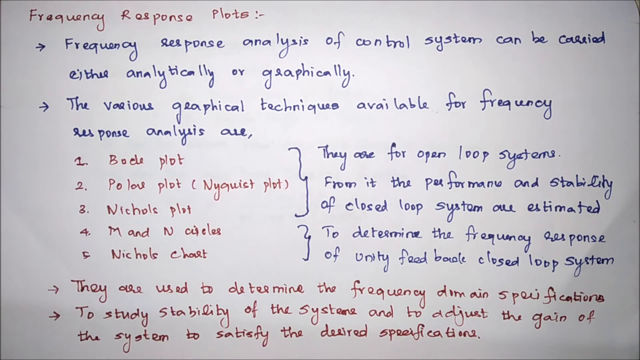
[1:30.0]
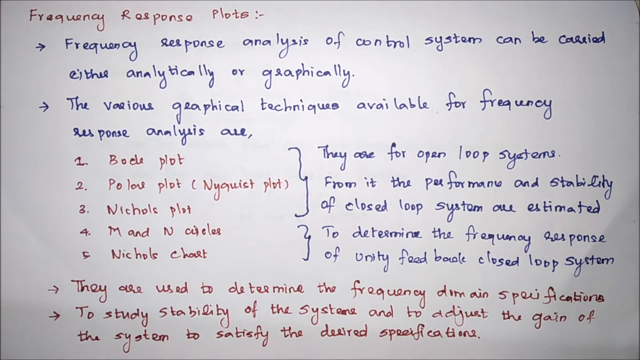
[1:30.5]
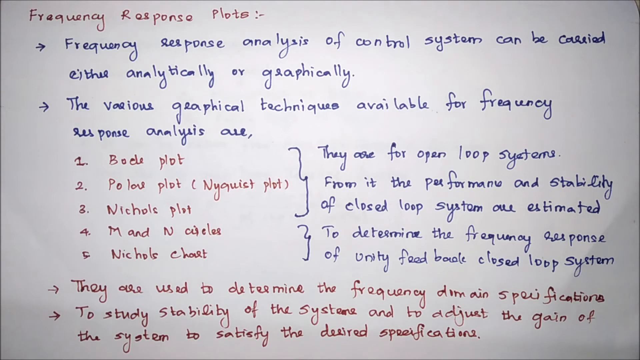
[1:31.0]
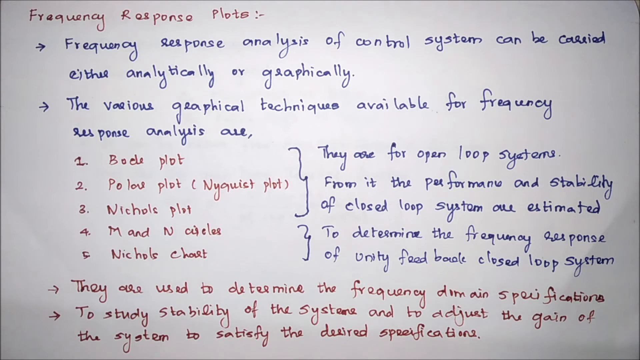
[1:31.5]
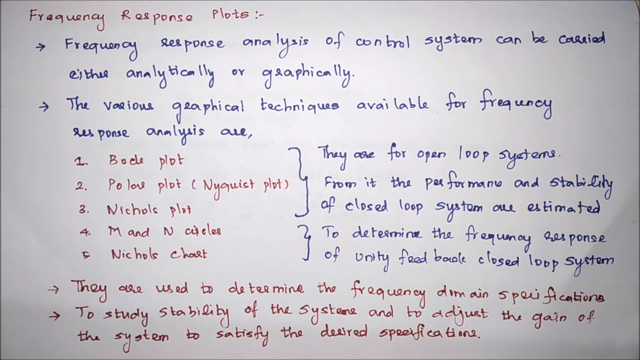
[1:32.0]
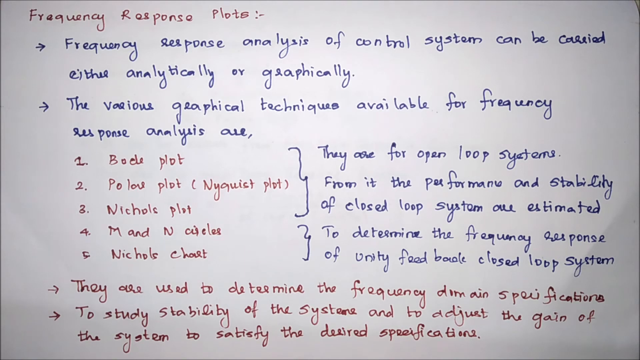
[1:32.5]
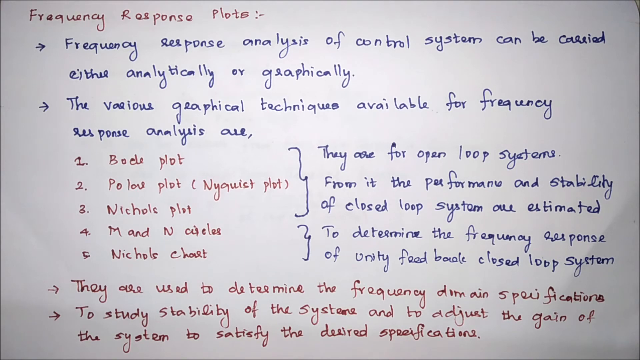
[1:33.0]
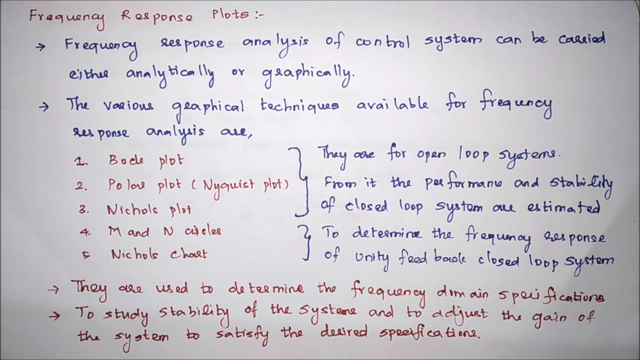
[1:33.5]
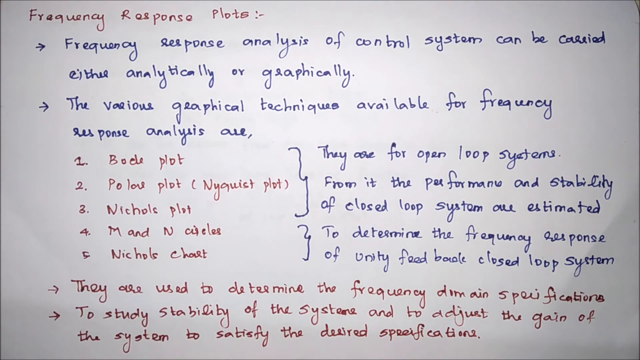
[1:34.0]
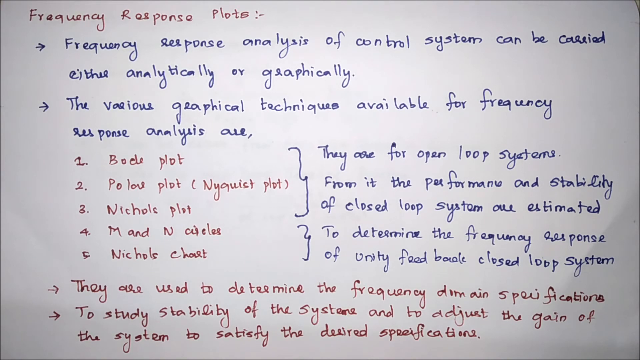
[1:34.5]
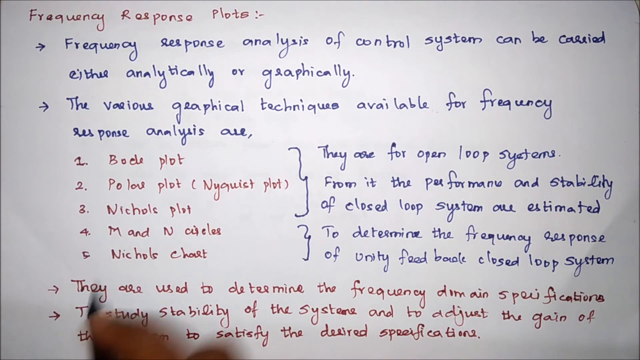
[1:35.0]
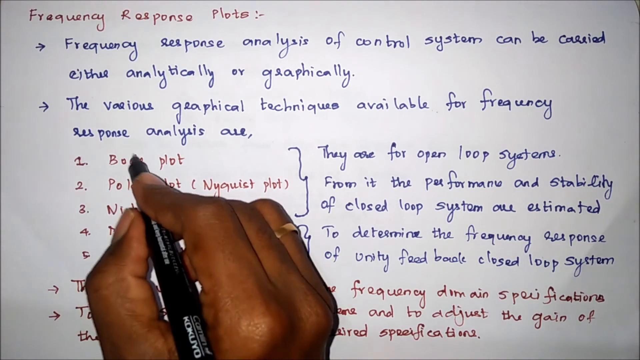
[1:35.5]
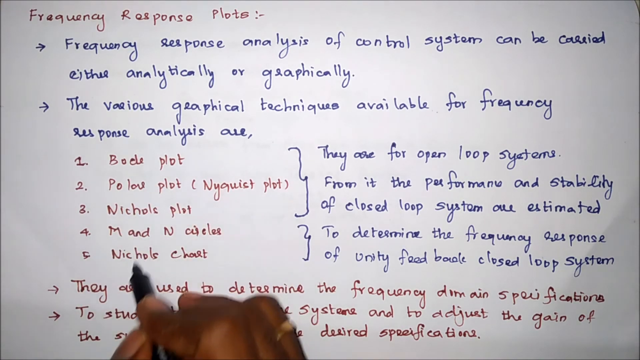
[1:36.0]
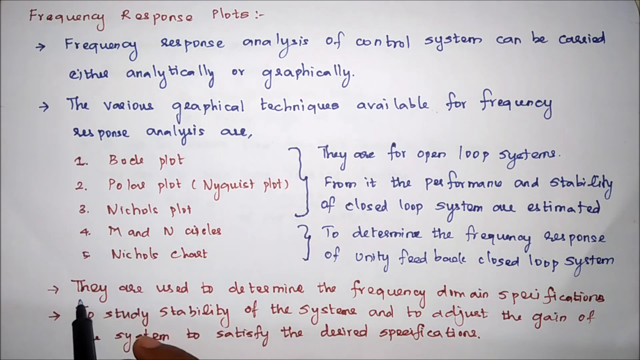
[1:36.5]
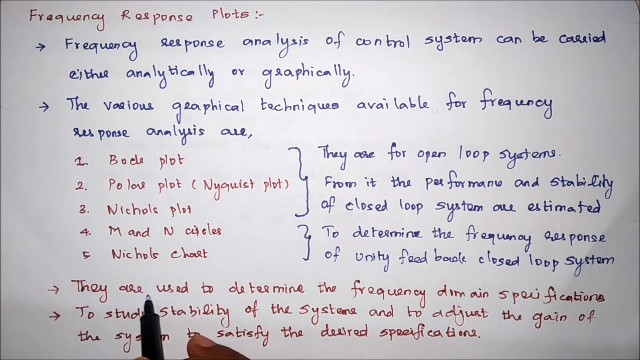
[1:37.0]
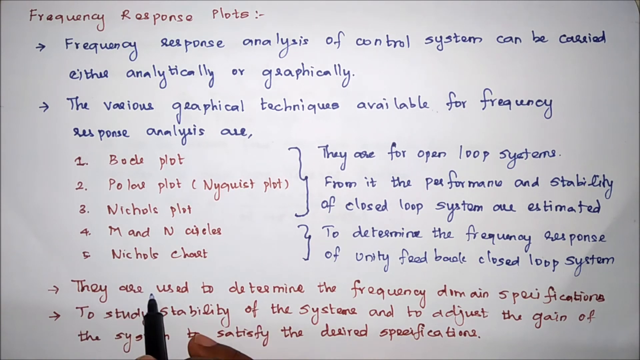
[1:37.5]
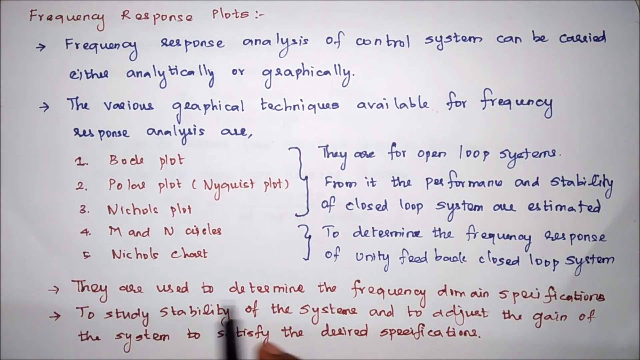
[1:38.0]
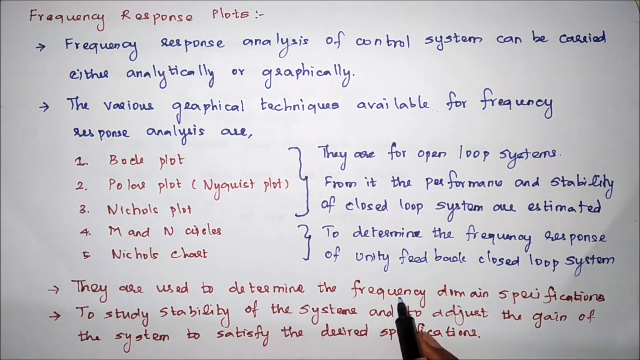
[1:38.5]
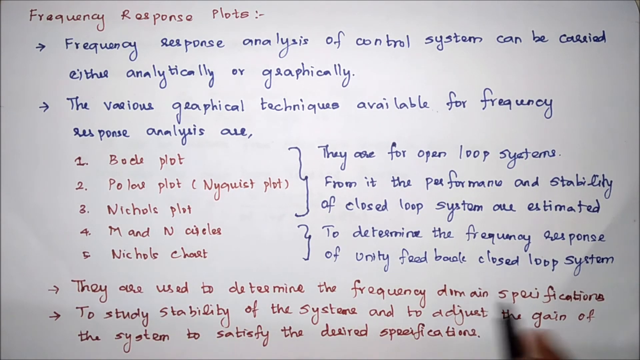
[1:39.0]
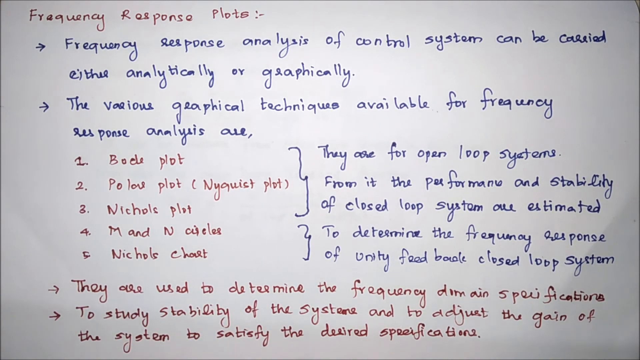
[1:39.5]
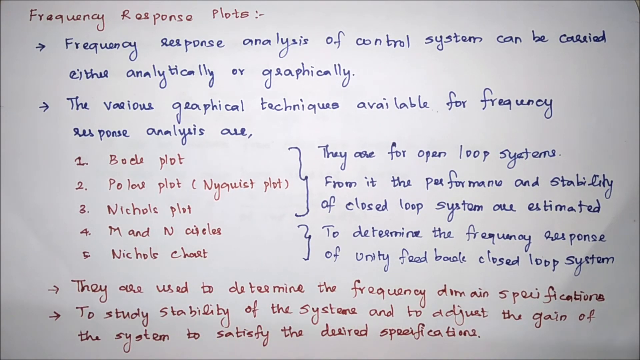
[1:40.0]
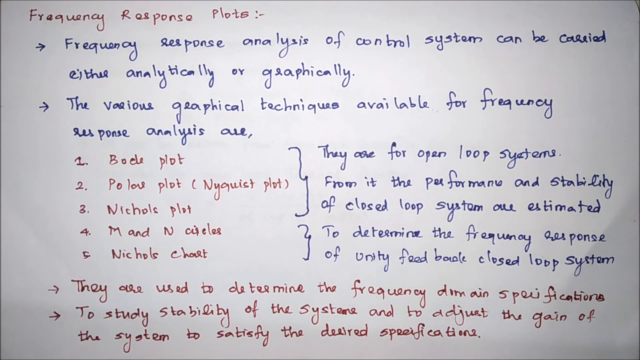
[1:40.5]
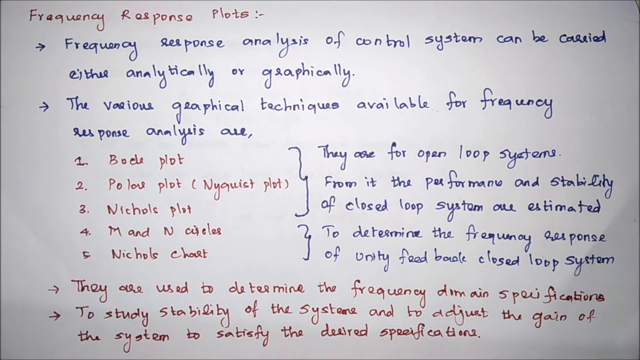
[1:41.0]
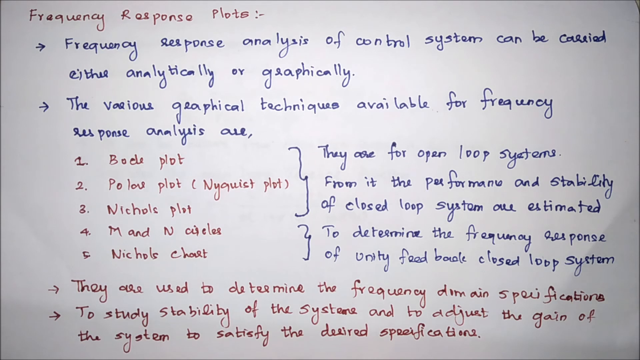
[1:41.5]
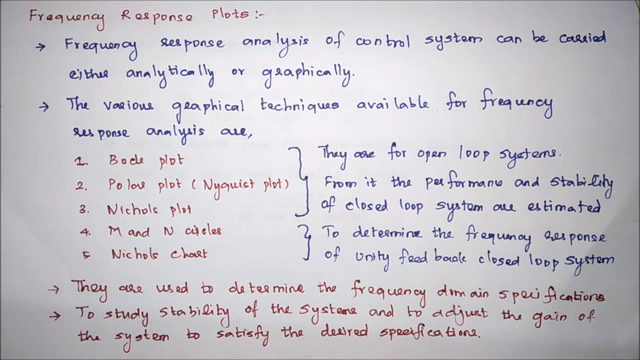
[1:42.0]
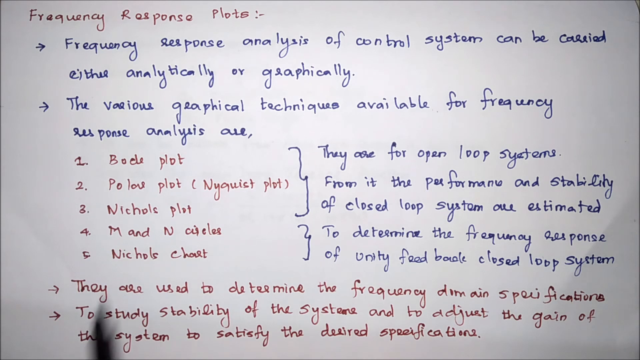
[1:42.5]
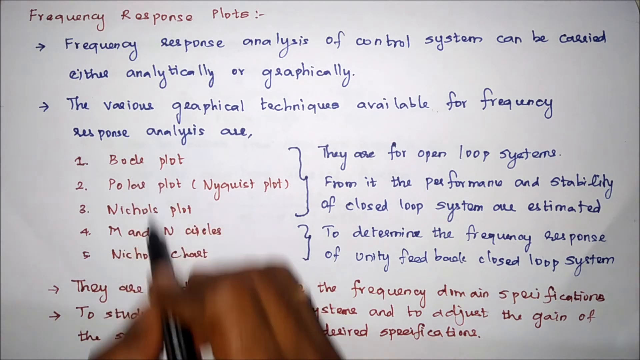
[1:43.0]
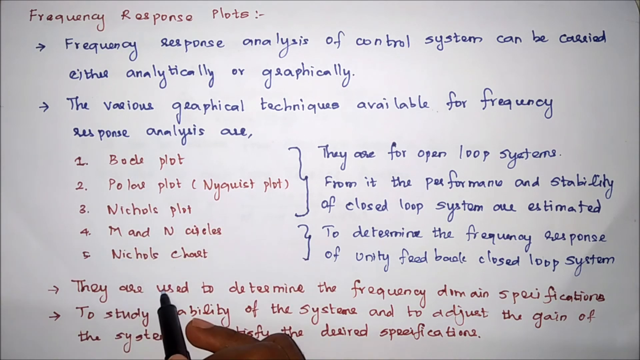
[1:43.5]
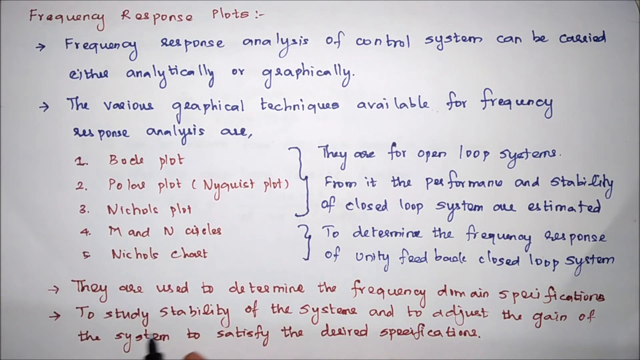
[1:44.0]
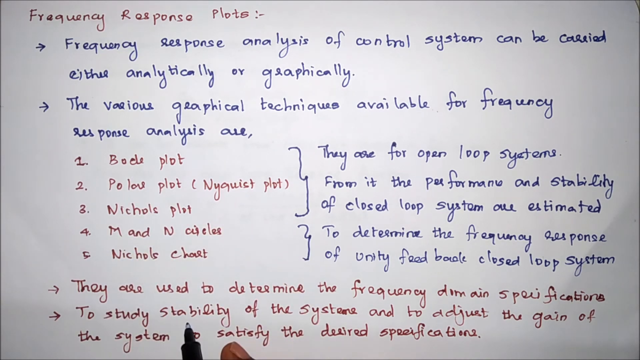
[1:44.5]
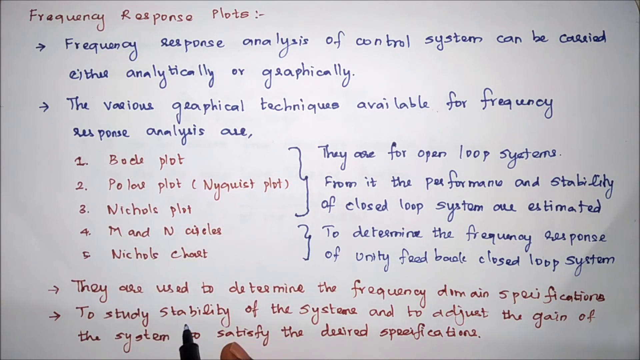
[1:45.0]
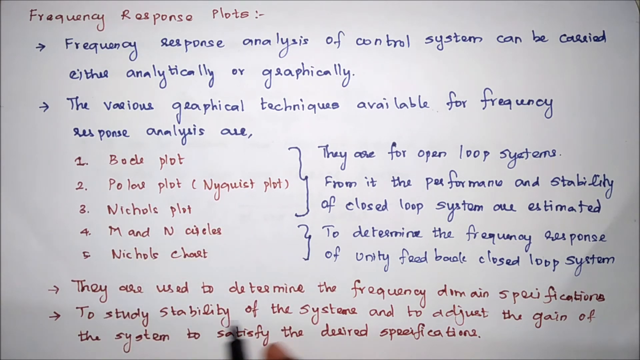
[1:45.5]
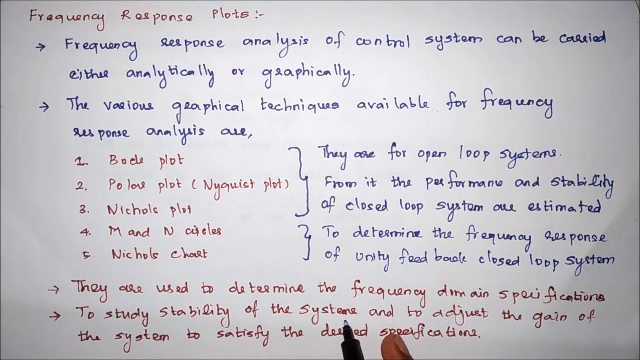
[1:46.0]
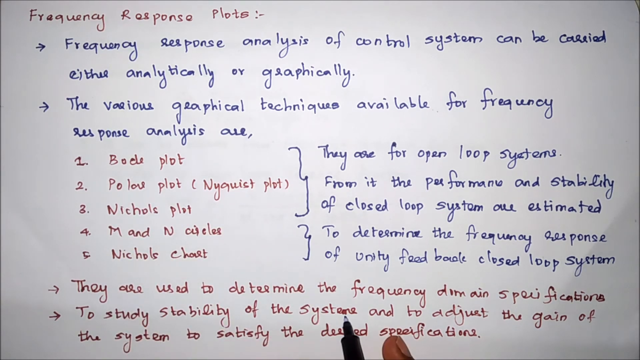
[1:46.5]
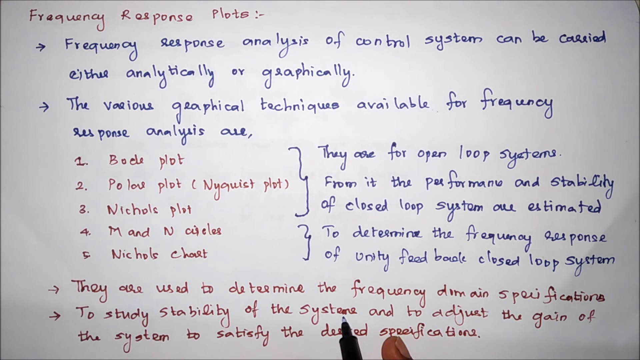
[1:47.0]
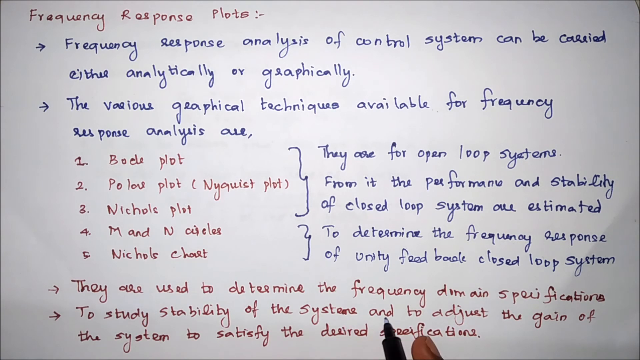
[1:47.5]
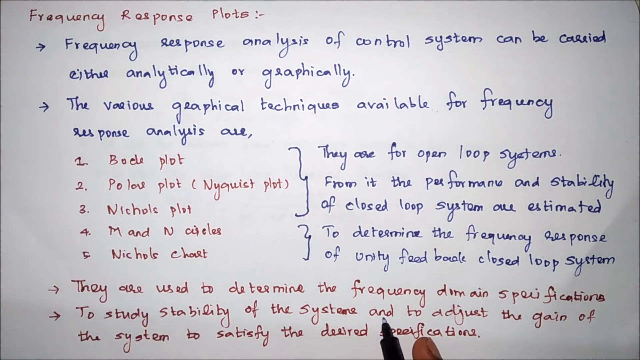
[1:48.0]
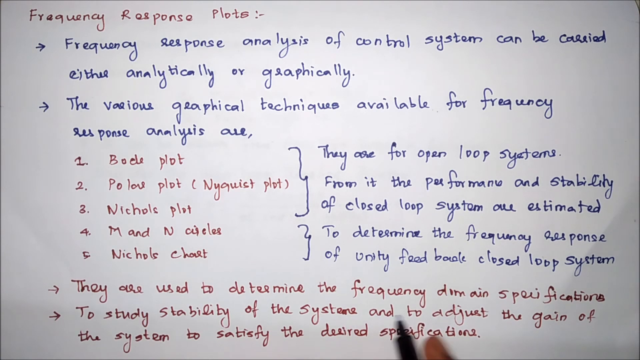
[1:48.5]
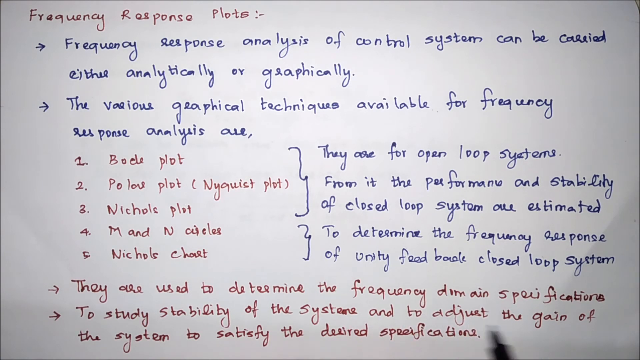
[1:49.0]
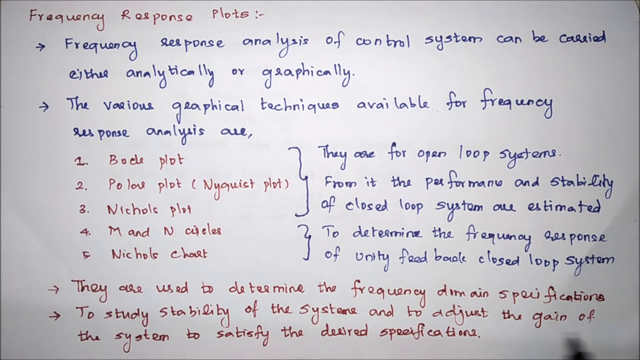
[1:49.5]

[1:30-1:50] The page shows words and sentences written in red ink and others in blue ink. There is a list labeled one to five with writing directly next to it, and directly under that are two bullet points with sentences. The tutor's hand is not visible at first; it then comes up and indicates the sentences at the very bottom, which say "they are used to determine the frequency domain specifications" and "to study stability of the systems and to adjust the gain of the system to satisfy delivered specifications." The hand then disappears again, leaving just the information on its own.